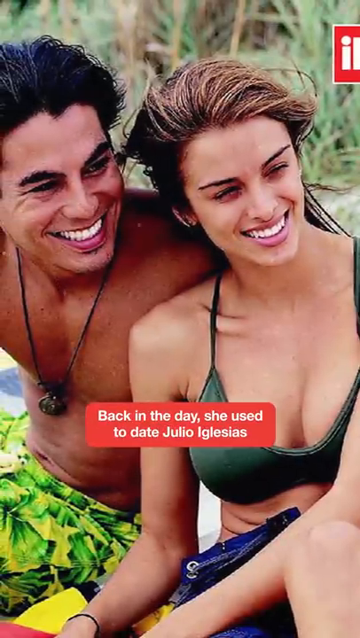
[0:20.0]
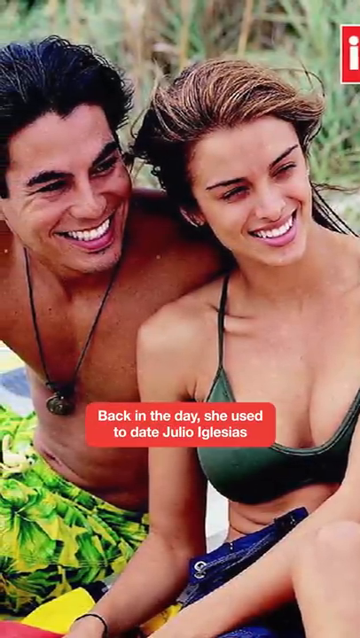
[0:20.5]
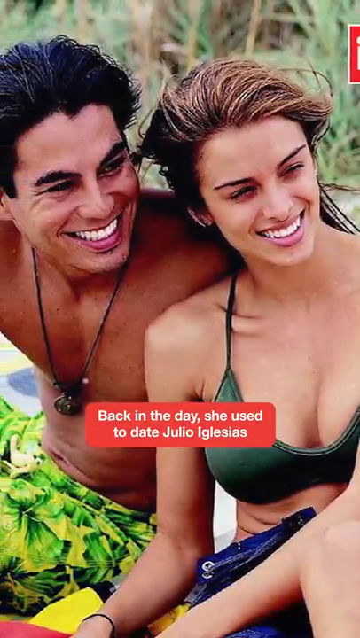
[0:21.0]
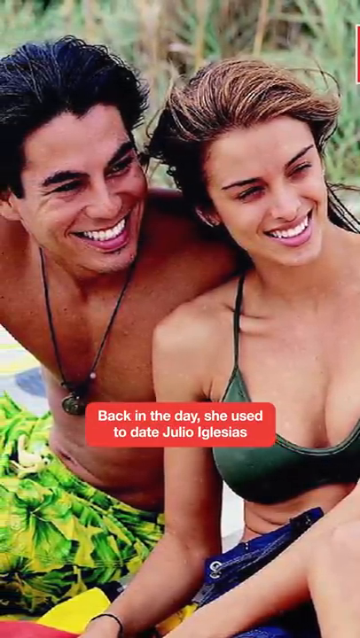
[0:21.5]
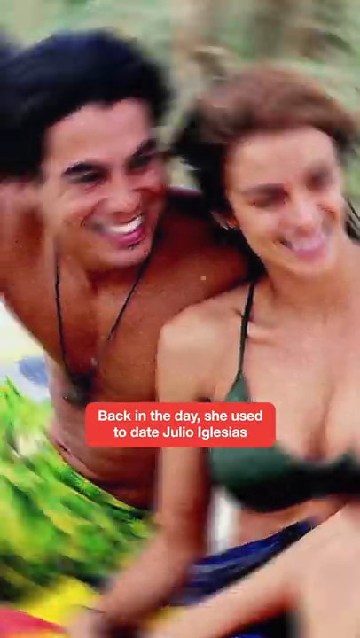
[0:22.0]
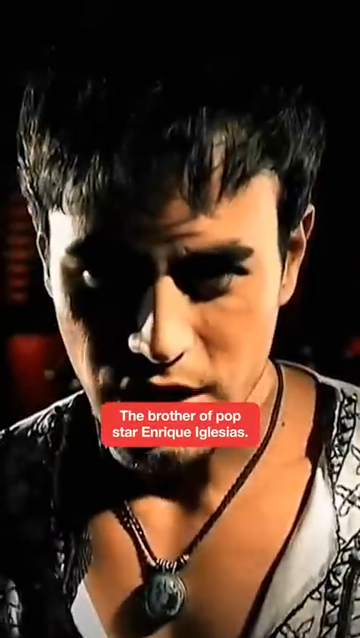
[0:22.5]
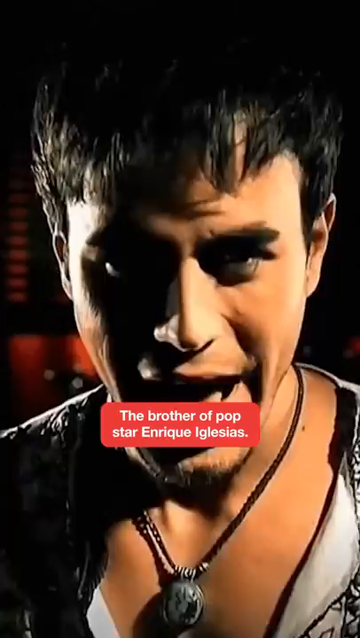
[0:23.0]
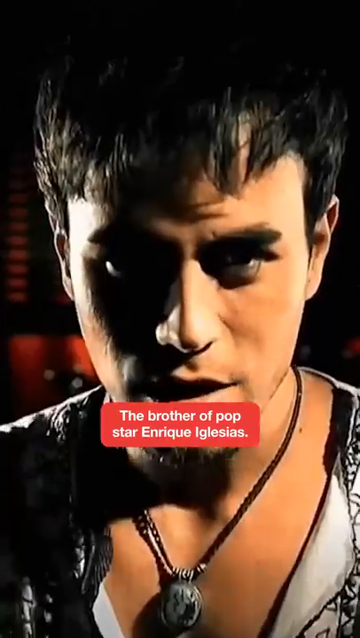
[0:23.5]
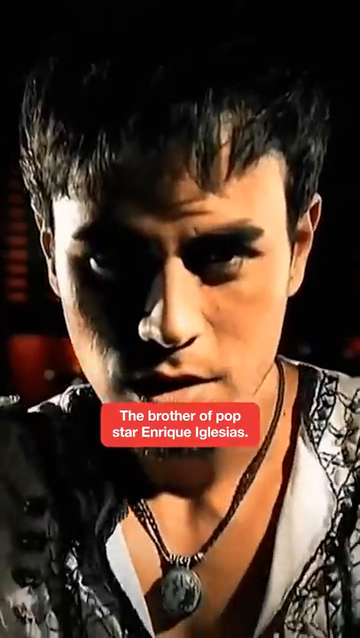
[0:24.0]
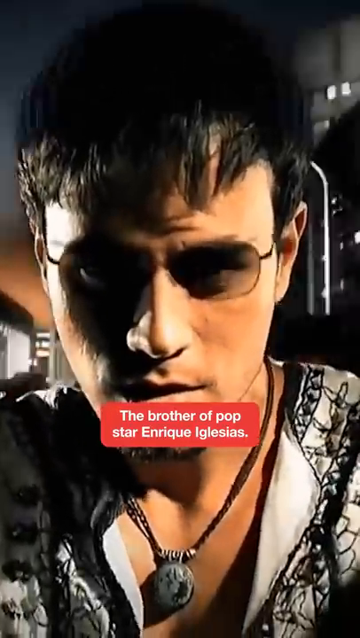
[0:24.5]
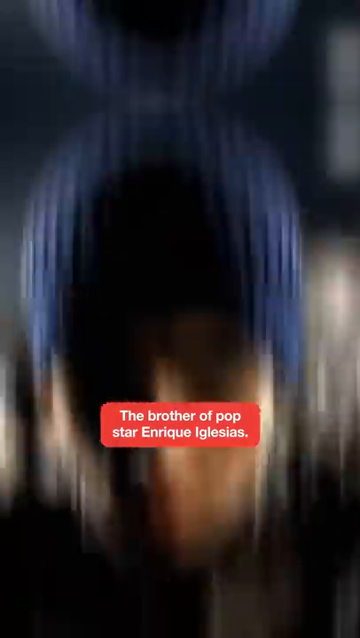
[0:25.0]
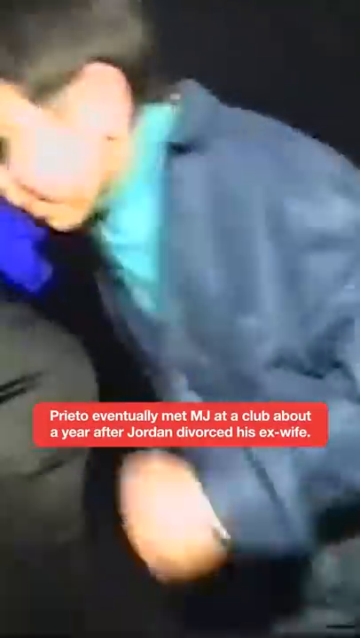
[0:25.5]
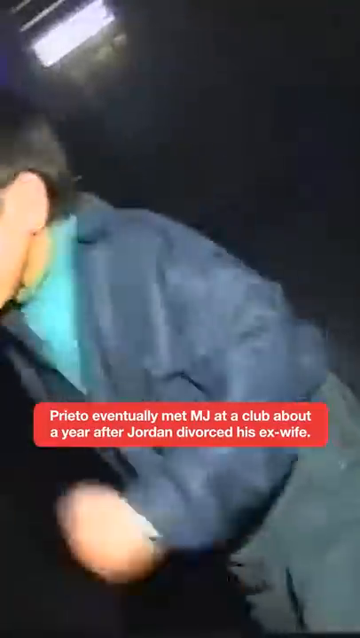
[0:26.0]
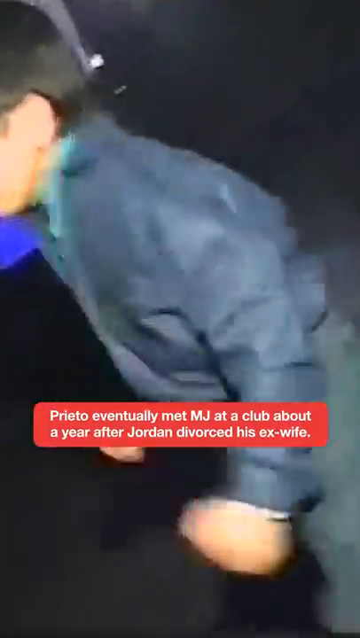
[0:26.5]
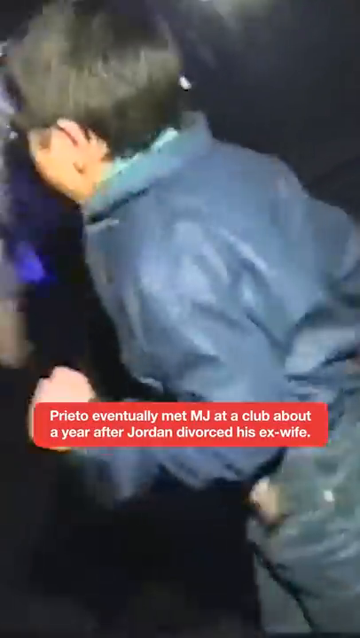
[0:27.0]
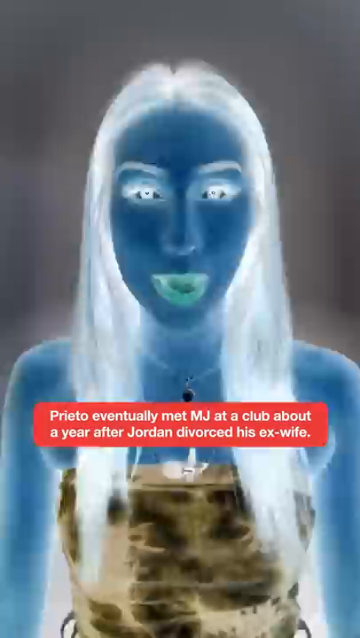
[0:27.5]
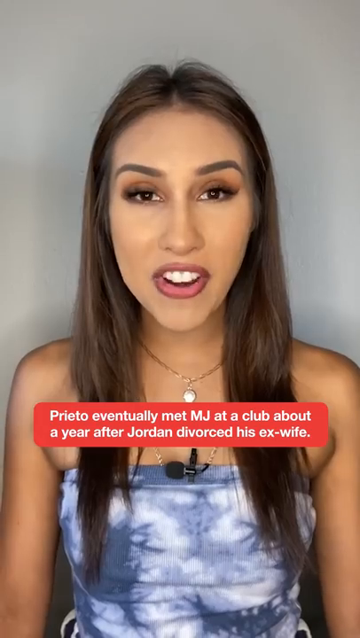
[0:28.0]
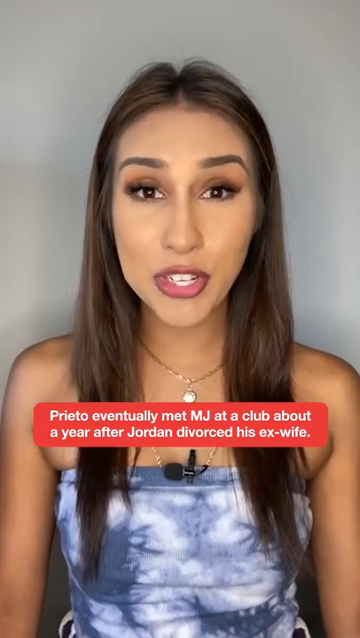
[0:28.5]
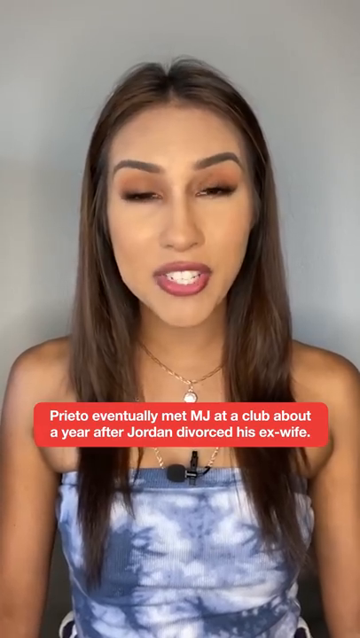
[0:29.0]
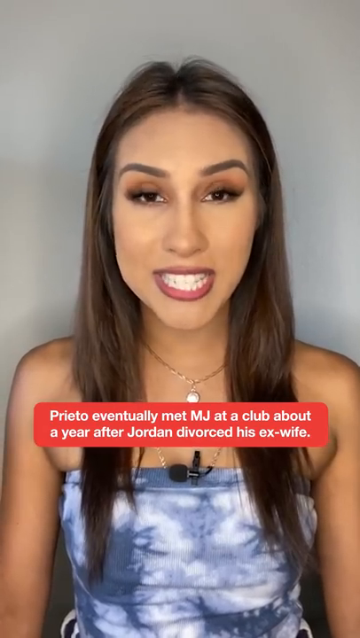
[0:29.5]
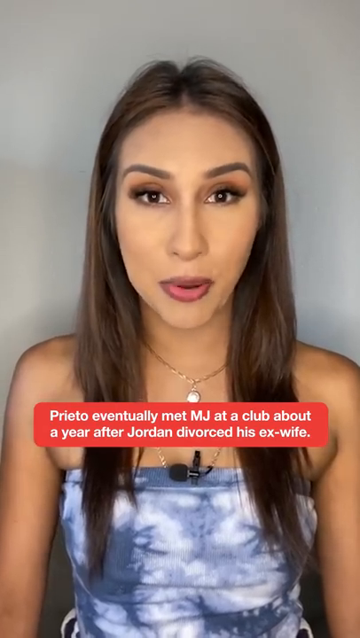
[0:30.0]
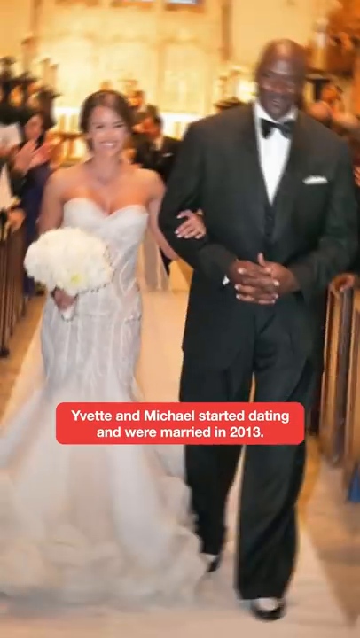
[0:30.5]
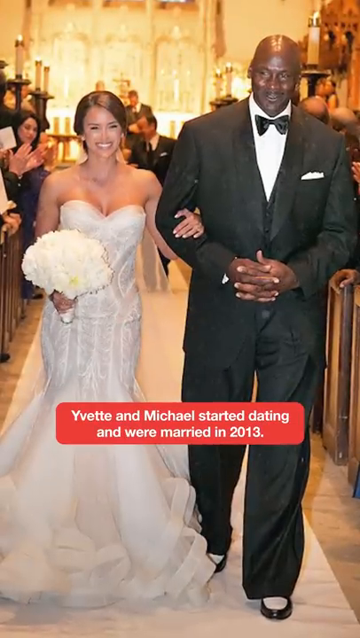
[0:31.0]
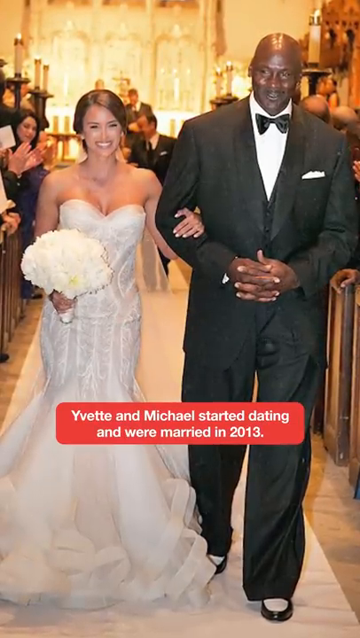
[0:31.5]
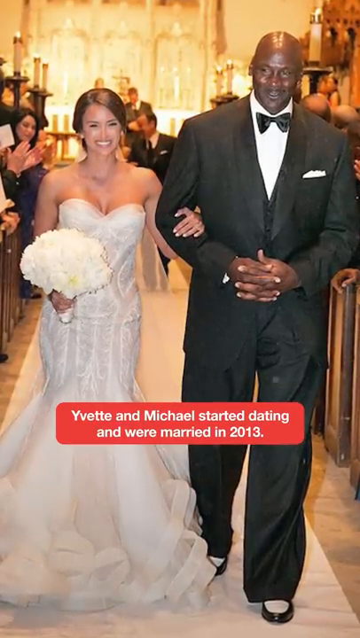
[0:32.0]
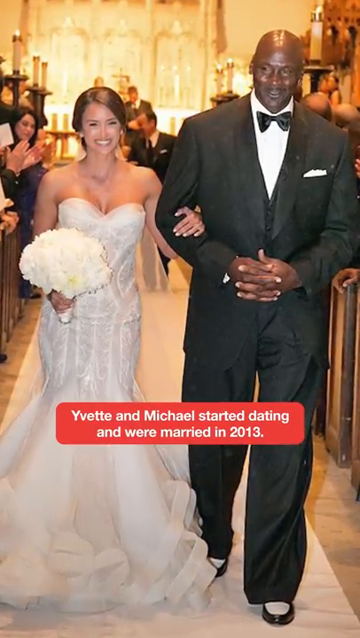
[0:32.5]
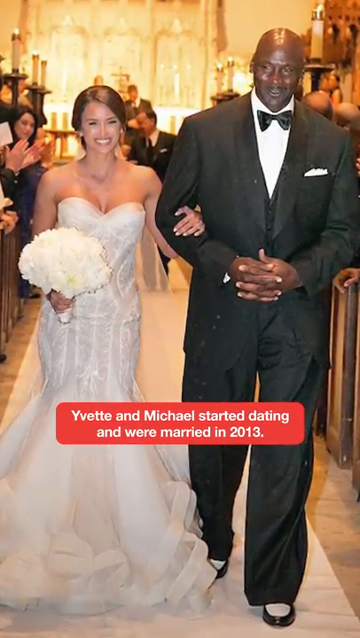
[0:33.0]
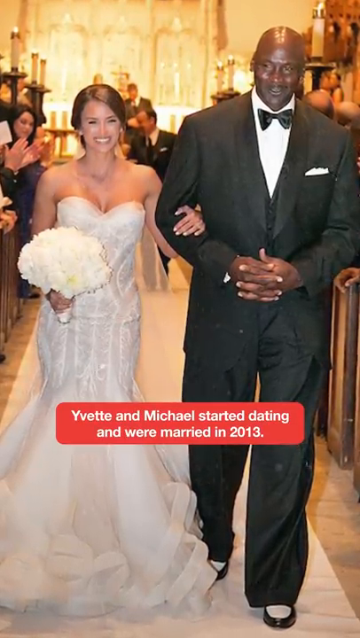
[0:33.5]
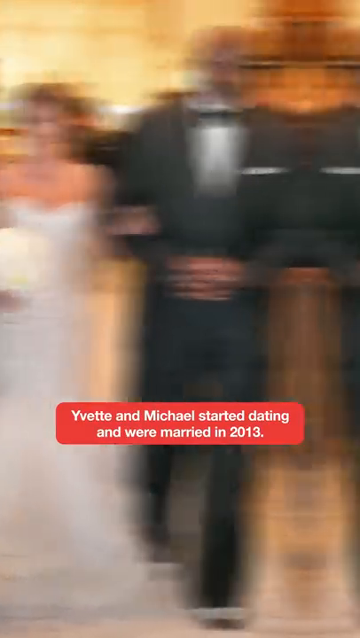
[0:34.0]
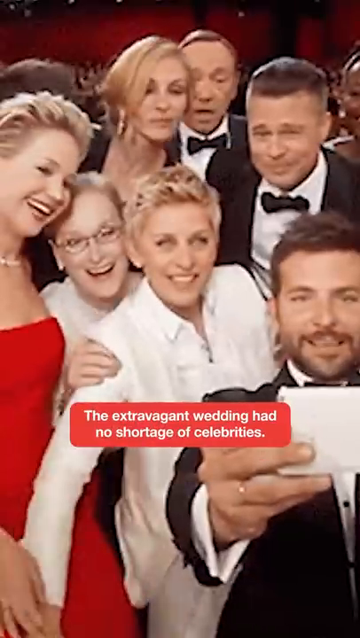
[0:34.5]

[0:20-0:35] Enrique Iglesias is shown, and the same white woman with long hair talks about Michael Jordan and his wife. A photo shows Yvette in her white wedding dress alongside Michael Jordan, apparently from when they got married. Next a little boy is shown dancing. A photo of a bunch of celebrities follows, with Ellen DeGeneres among them; this photo might have been taken at the wedding, but it is not clear.